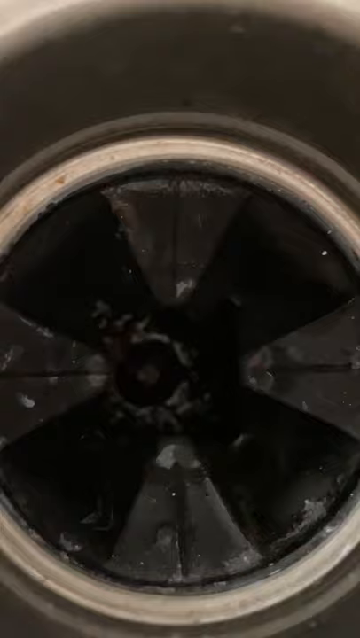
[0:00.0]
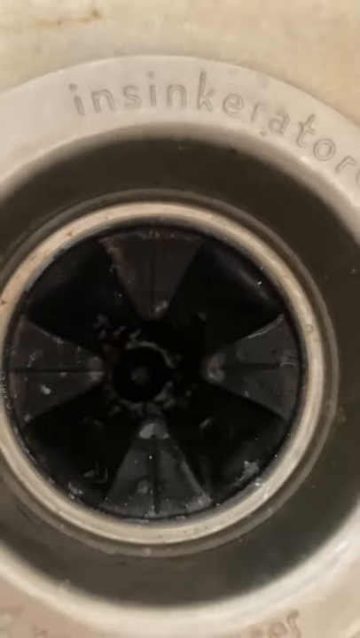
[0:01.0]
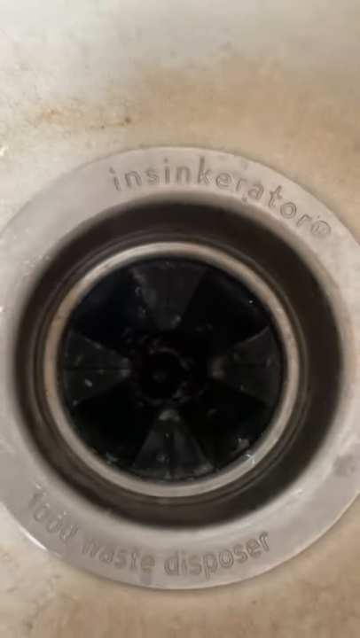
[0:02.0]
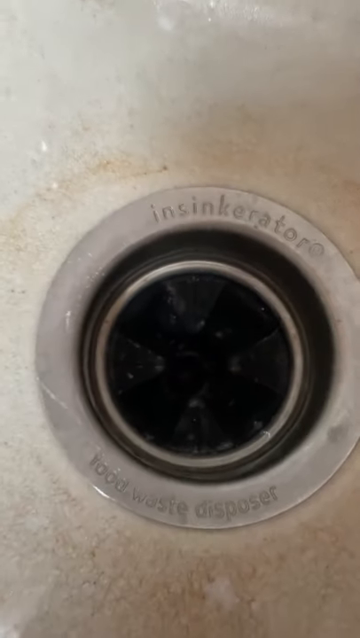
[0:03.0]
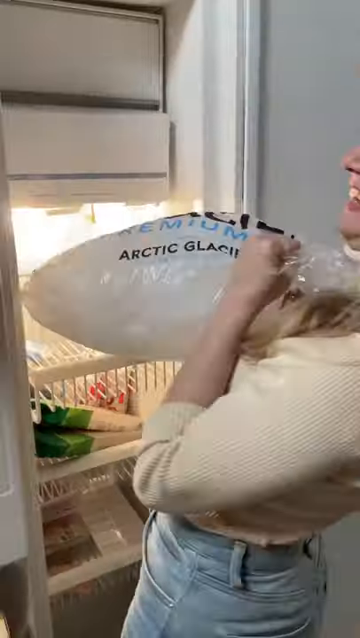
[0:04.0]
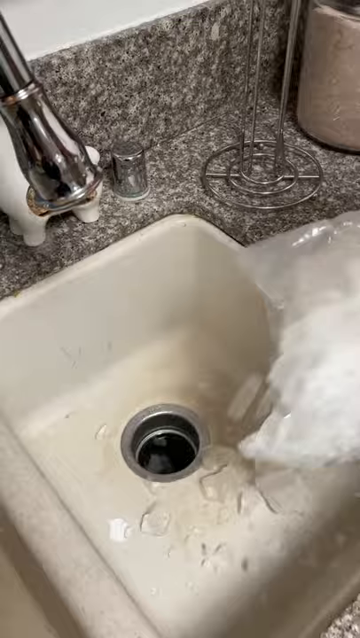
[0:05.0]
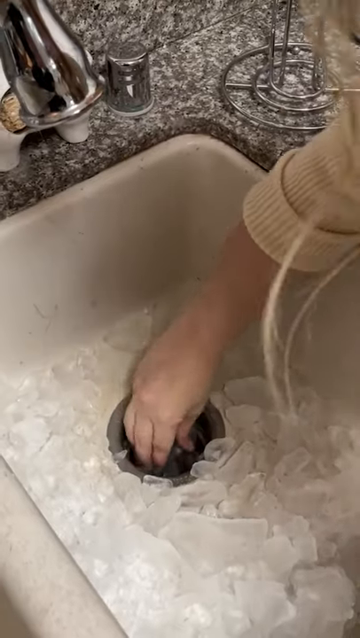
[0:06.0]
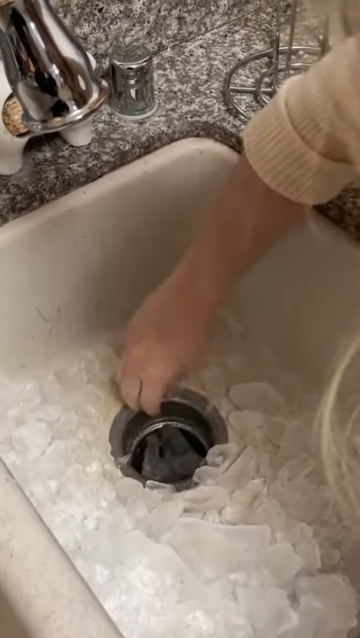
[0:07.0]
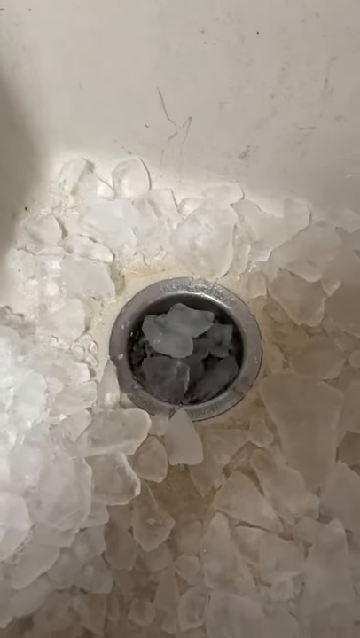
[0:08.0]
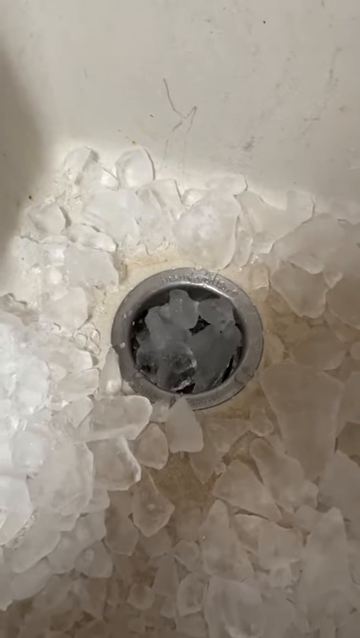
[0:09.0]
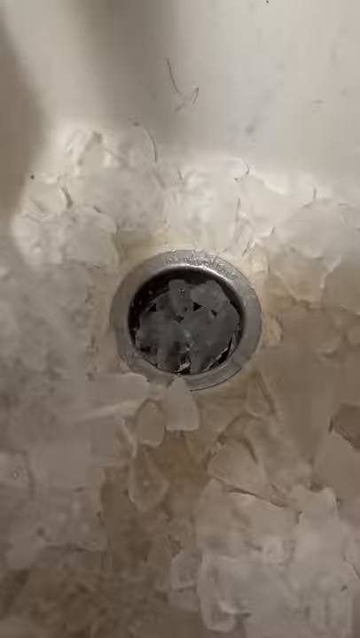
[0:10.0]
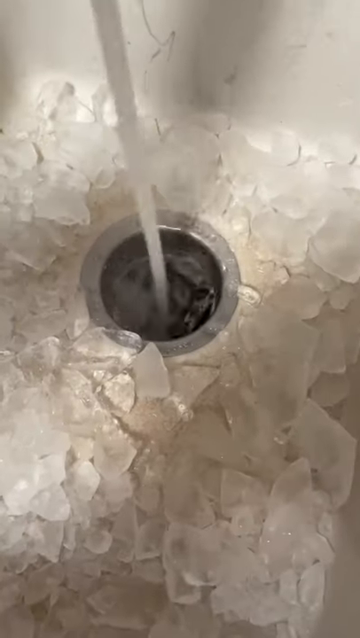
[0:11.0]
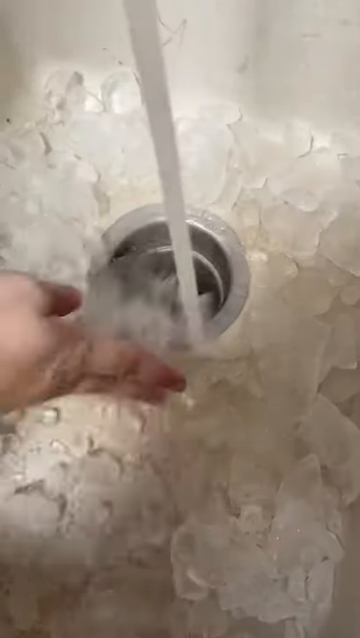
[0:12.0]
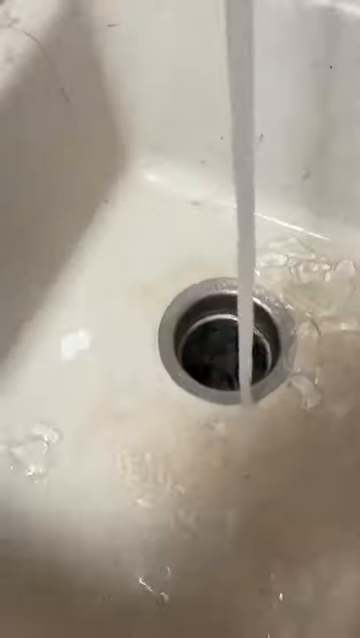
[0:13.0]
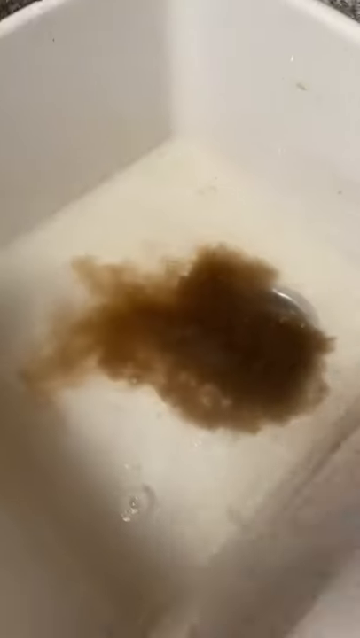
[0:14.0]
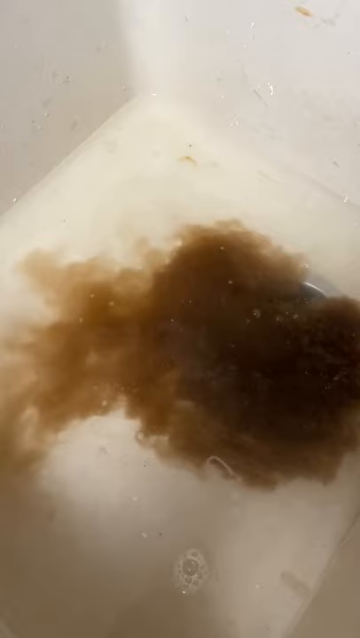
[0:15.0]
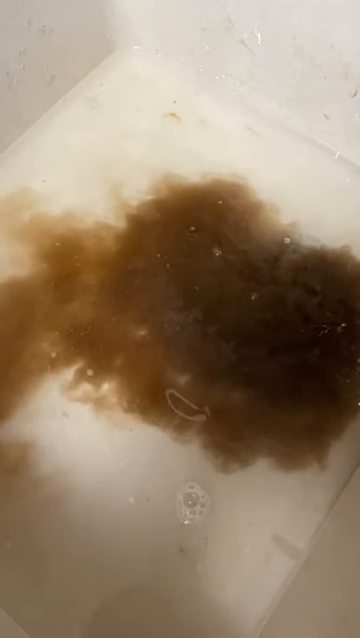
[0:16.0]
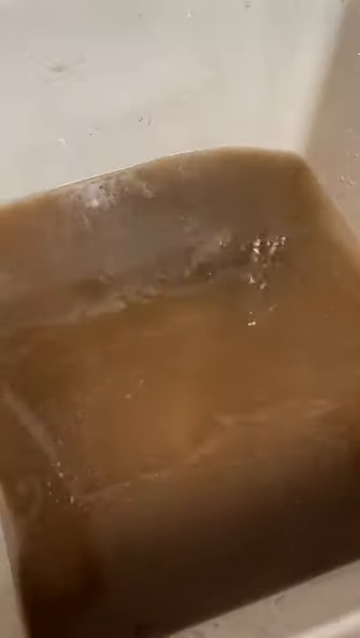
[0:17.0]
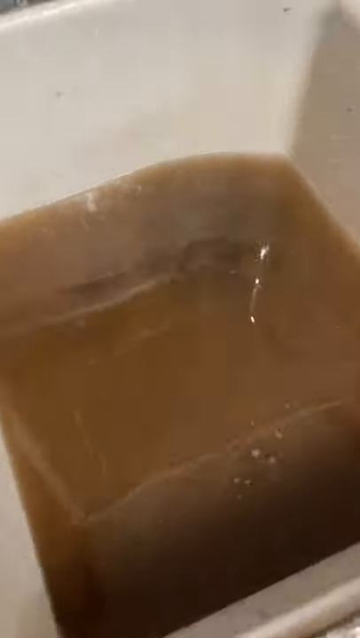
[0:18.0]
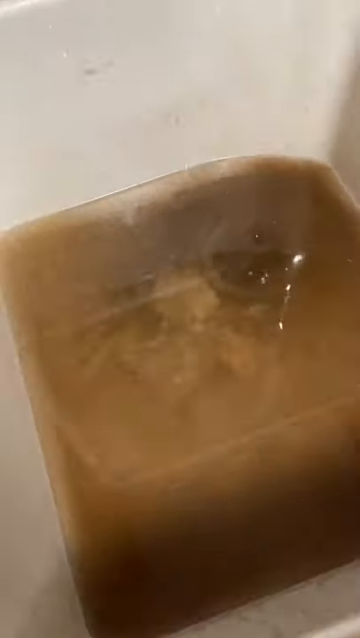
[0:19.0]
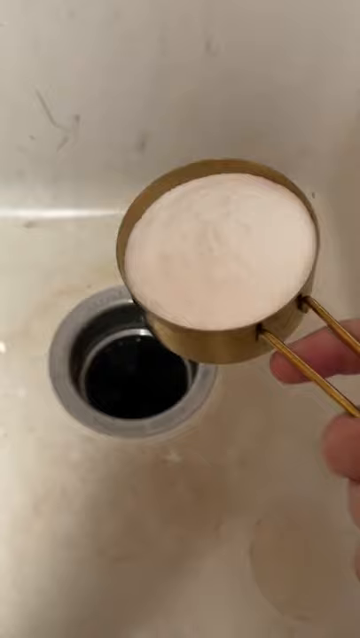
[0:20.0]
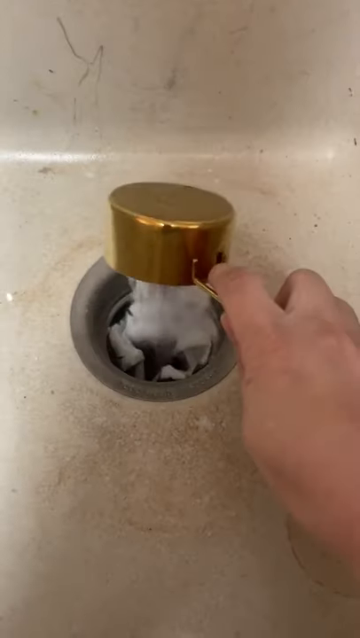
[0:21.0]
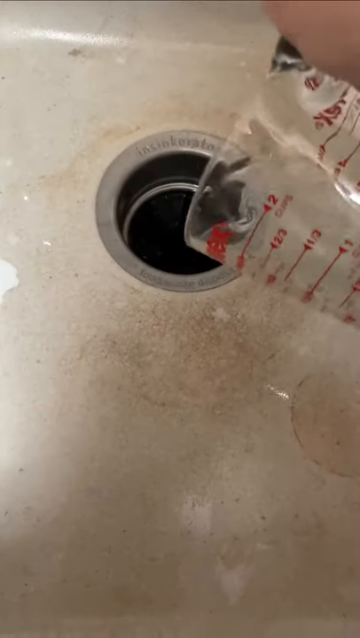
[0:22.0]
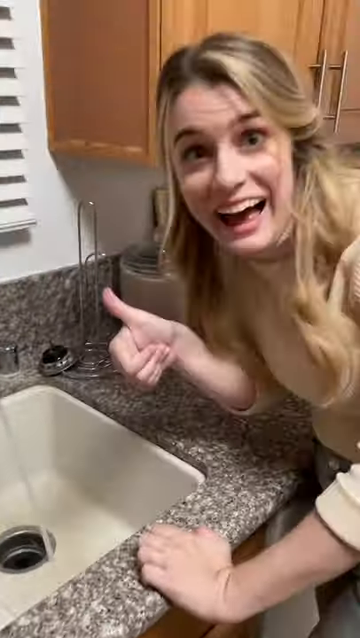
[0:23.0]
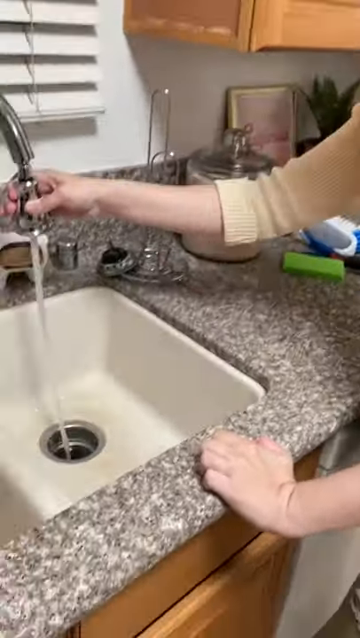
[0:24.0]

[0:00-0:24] In a video titled Disposal Cleaning Hacks, a blonde white woman shows how to clean the food garbage disposal on a kitchen sink. First she takes a giant bag of ice out of her refrigerator, puts the ice in the disposal, and turns the disposal on. She then runs hot water into the disposal, and in the opposite sink a bunch of dark brown dirty water begins to boil up. Next she puts what appears to be baking soda into the disposal, and then pours a blue liquid down the drain.